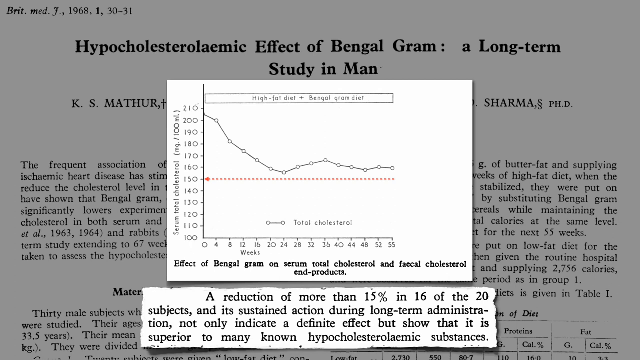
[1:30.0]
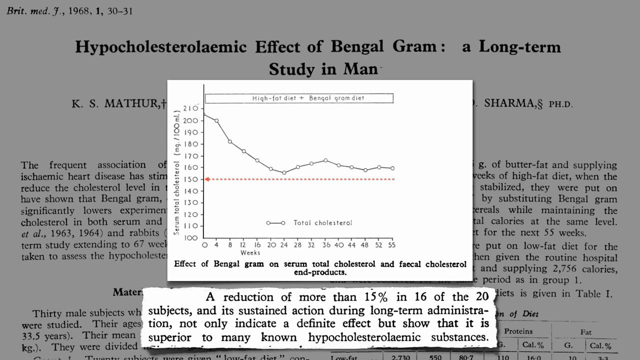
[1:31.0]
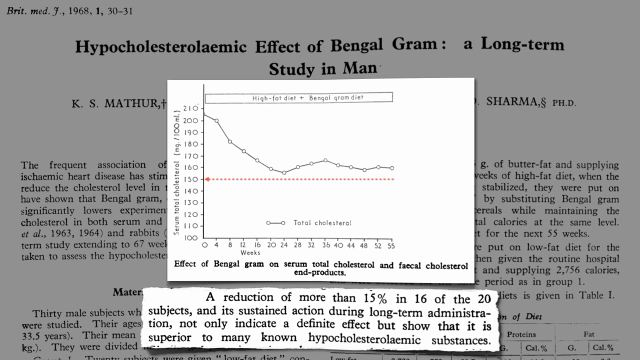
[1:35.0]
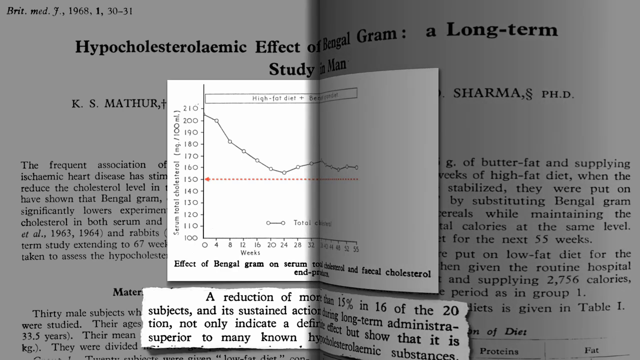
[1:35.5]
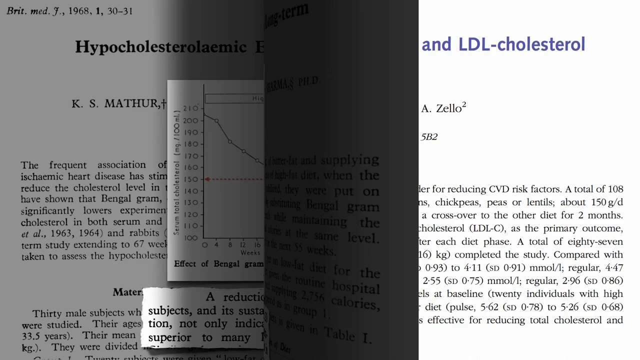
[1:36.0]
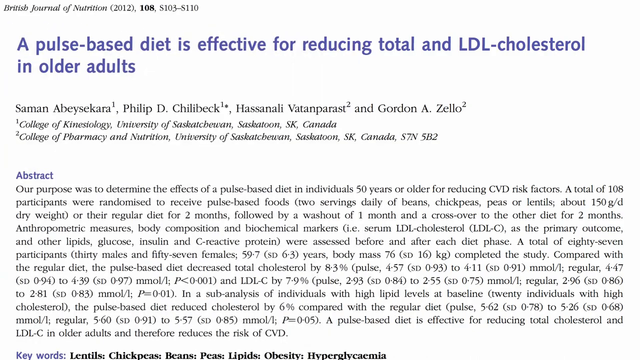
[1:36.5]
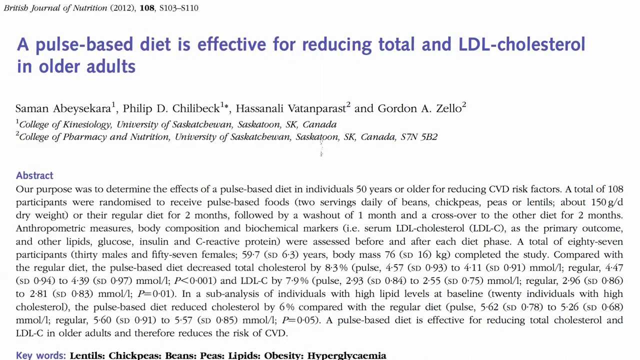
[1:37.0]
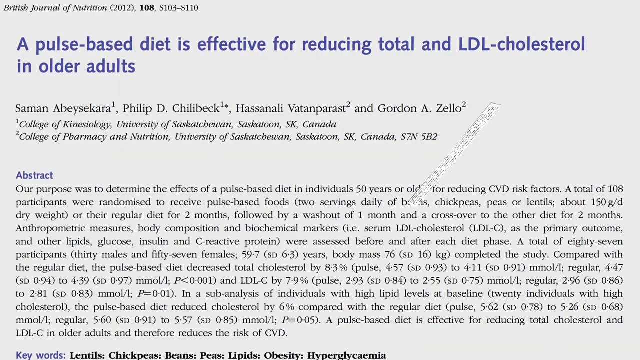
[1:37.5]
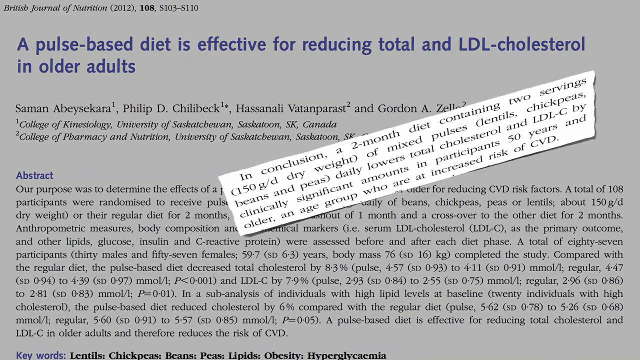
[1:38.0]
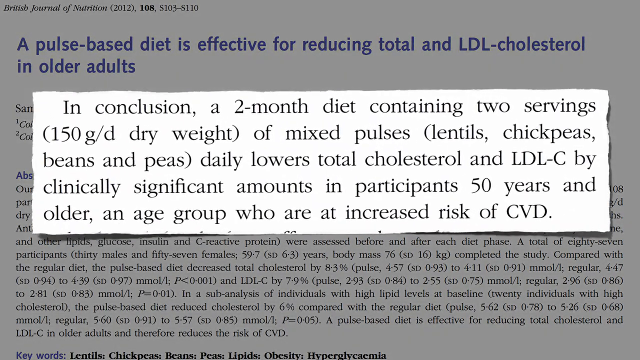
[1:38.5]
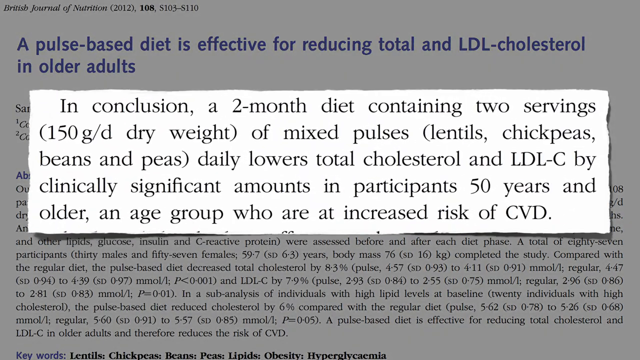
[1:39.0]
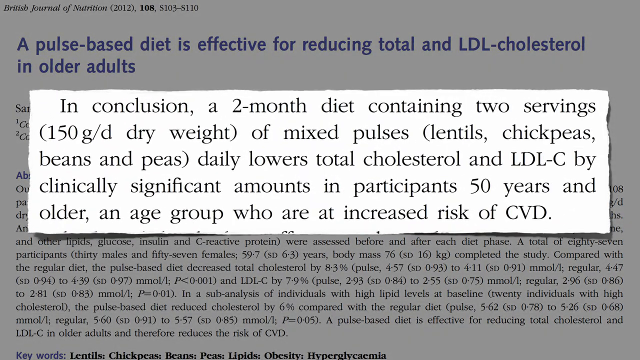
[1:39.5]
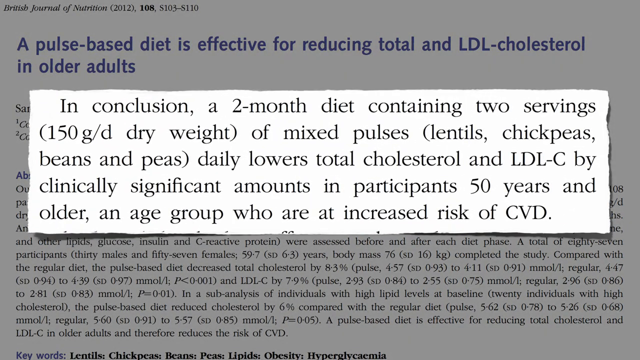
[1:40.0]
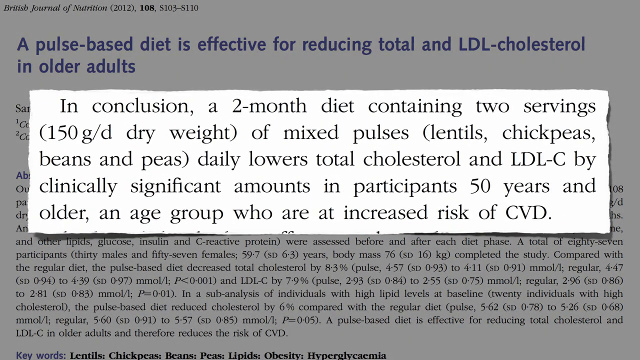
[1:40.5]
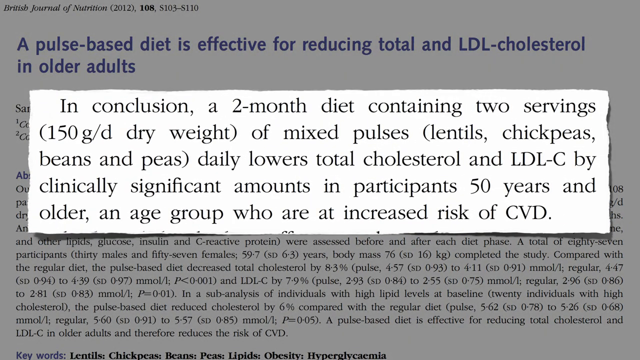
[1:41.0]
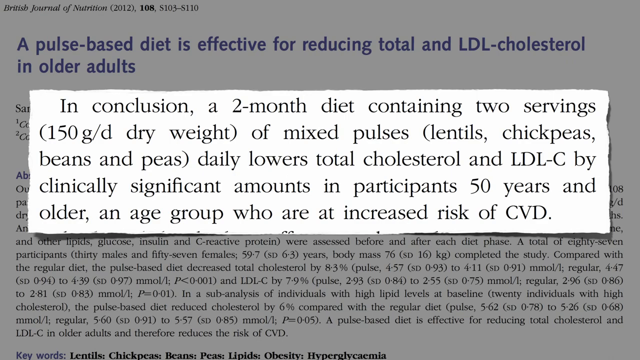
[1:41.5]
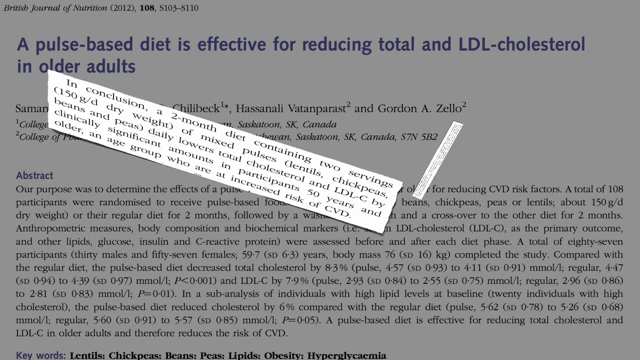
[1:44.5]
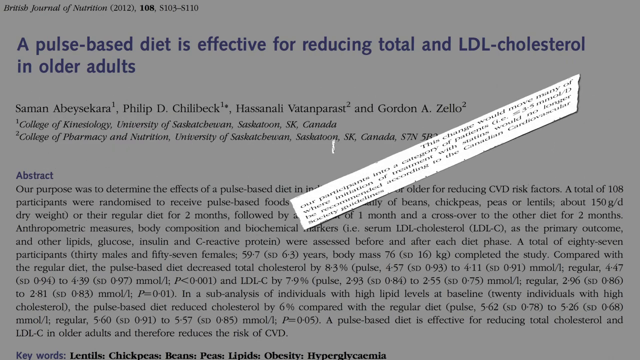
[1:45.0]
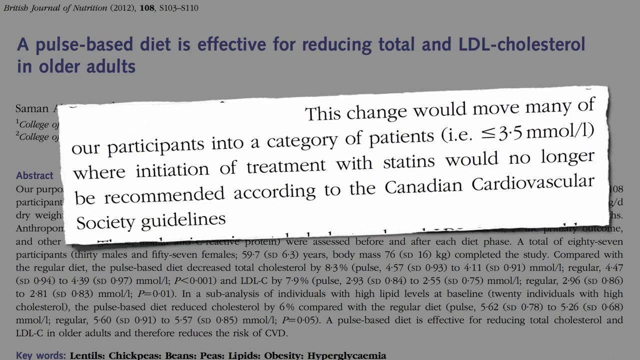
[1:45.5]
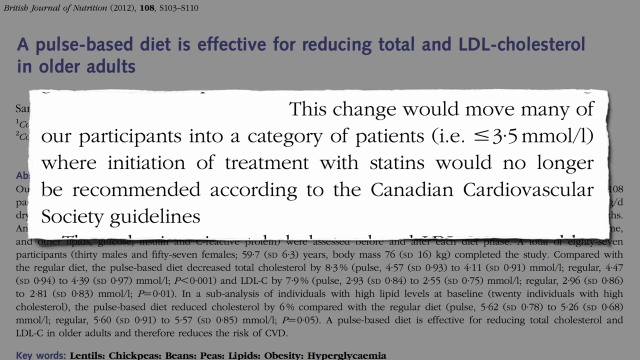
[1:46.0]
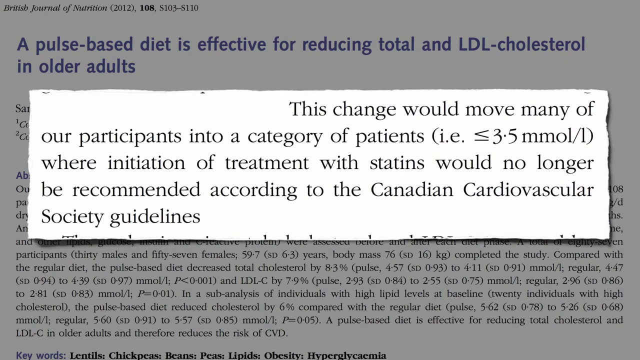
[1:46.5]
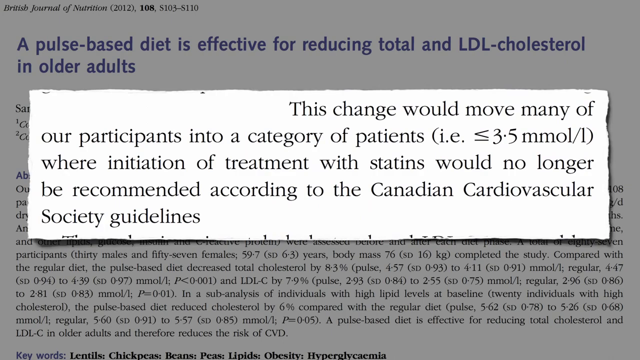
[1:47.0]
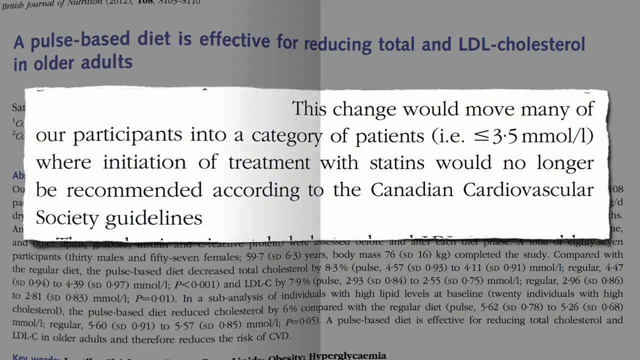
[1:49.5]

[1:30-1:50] A graph shows high fat diets and a Bengal gram diet in relation to reducing total cholesterol per 100 mL, alongside the statement of a reduction of more than 15% in 16 of the 20 subjects indicating a definite effect. Another study appears, titled "A pulse-based diet is effective for reducing total and LDL cholesterol in older adults". A specific excerpt is pointed to, reading "in conclusion, a two-month diet containing two servings, 150 grams dry weight of mixed pulses, lentils, chickpeas, beans, and peas daily, lowers total cholesterol and LDL-C by clinically significant amounts in participants 50 years and older, an age group who are at increased risk of CBD". The view then moves to another excerpt stating "the change would move many of our participants into a category of patients less than or equal to 3.5 mmol per liter, where initiation of treatment with statins would no longer be recommended according to the Canadian Cardiovascular Society guidelines".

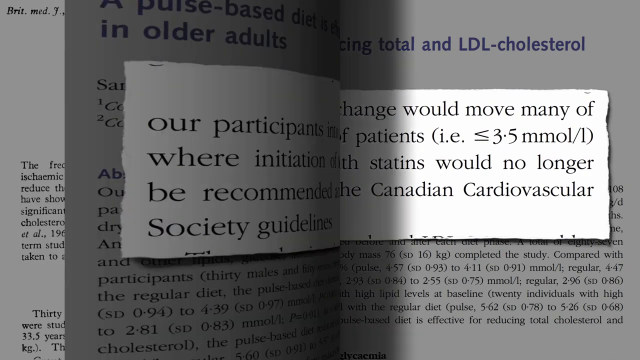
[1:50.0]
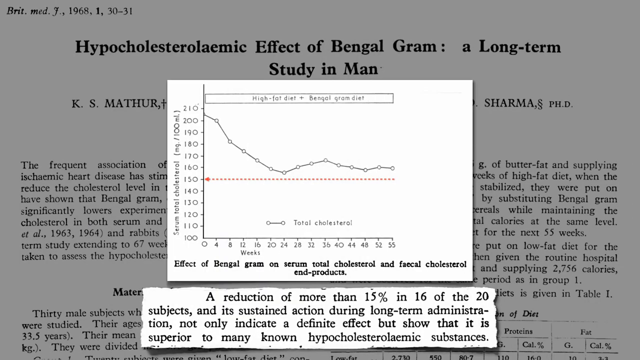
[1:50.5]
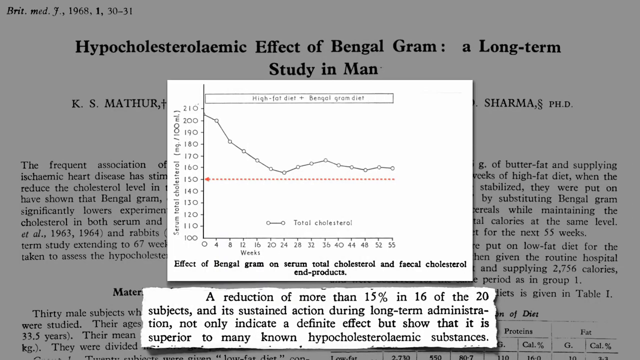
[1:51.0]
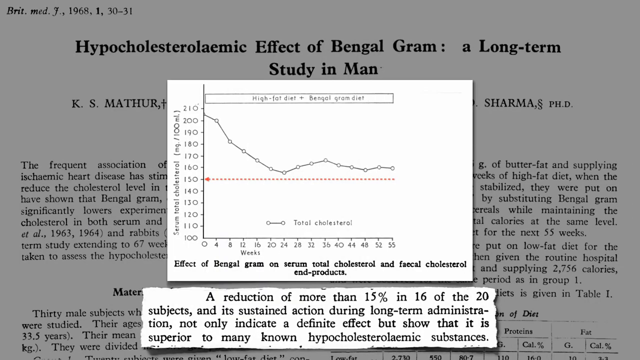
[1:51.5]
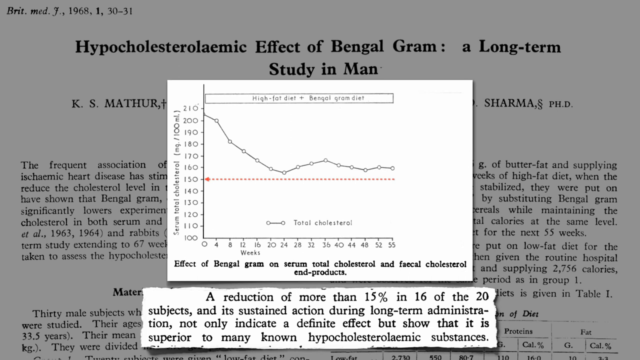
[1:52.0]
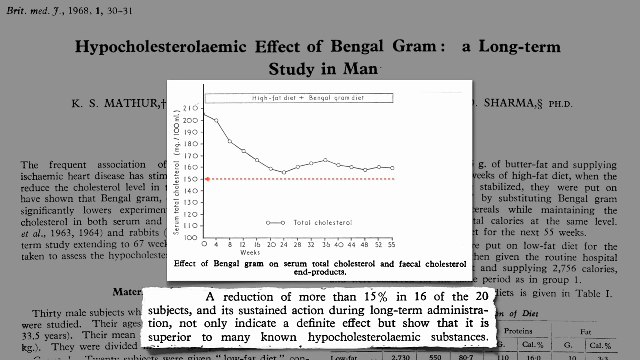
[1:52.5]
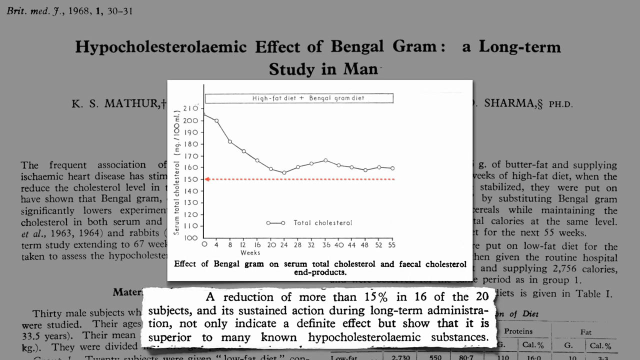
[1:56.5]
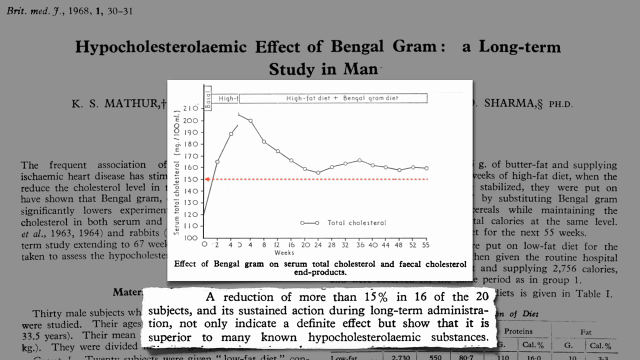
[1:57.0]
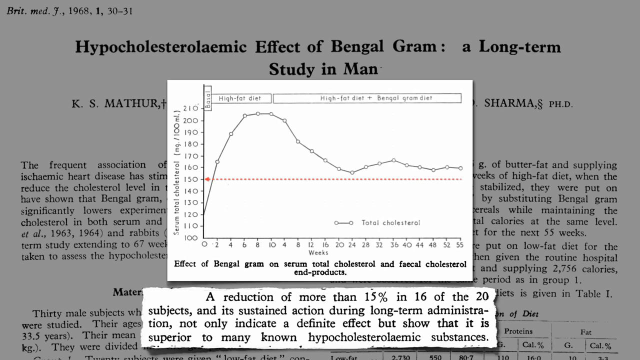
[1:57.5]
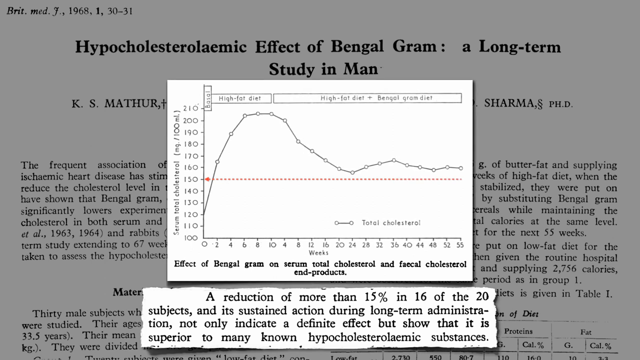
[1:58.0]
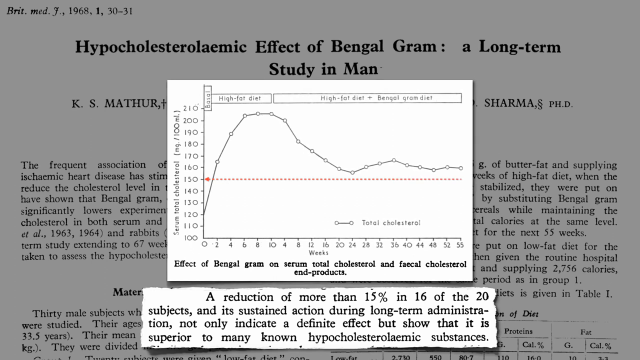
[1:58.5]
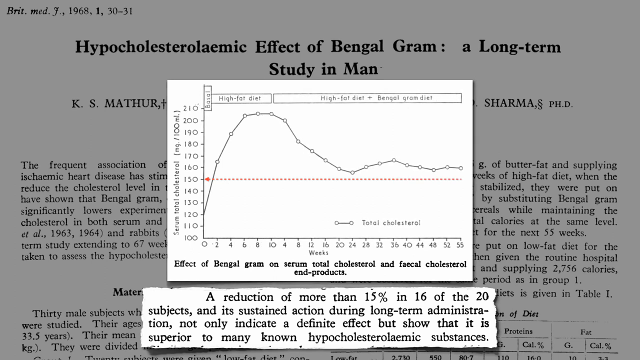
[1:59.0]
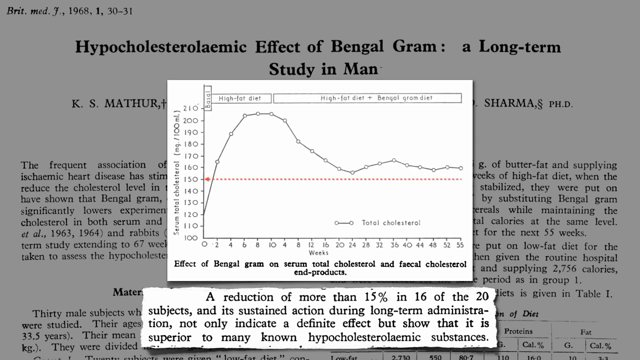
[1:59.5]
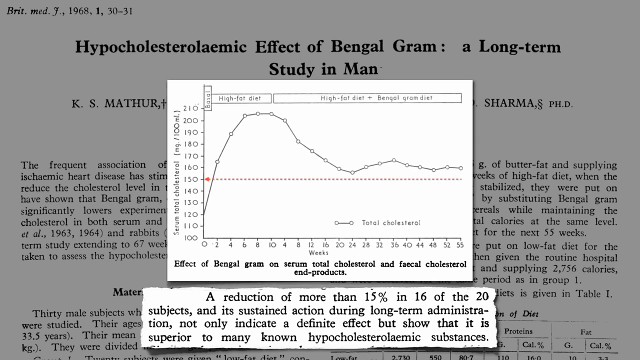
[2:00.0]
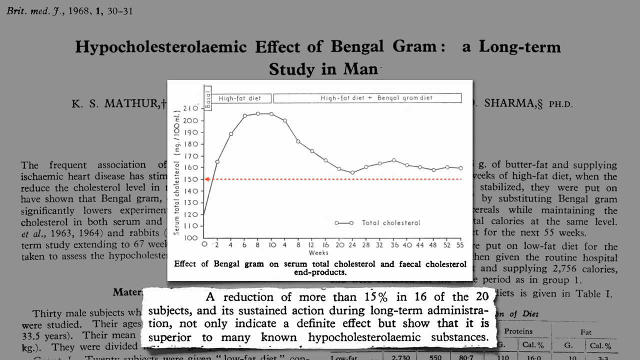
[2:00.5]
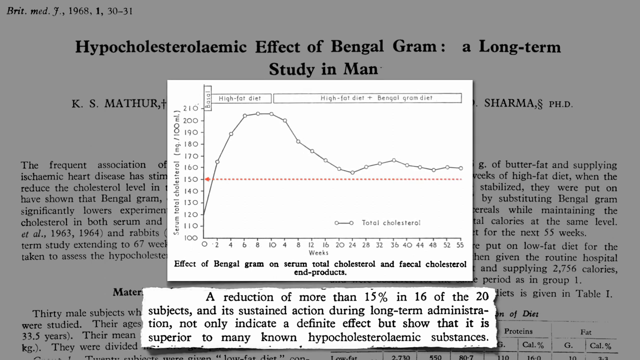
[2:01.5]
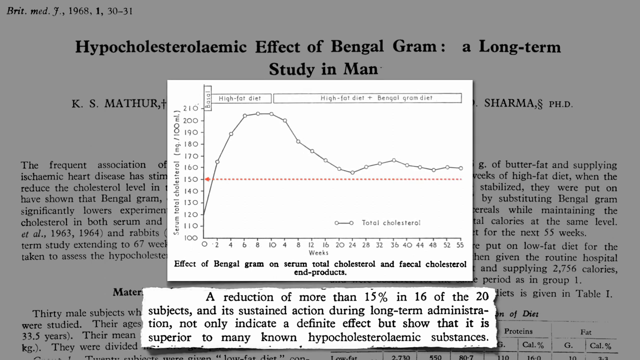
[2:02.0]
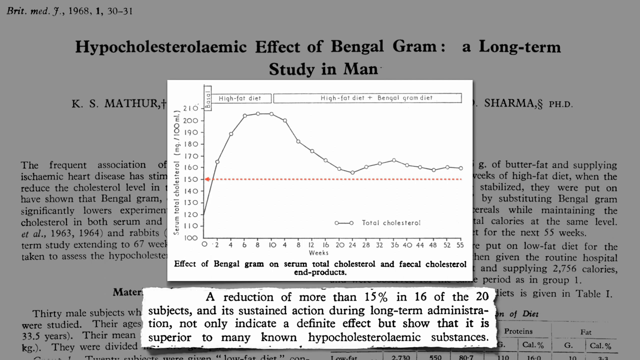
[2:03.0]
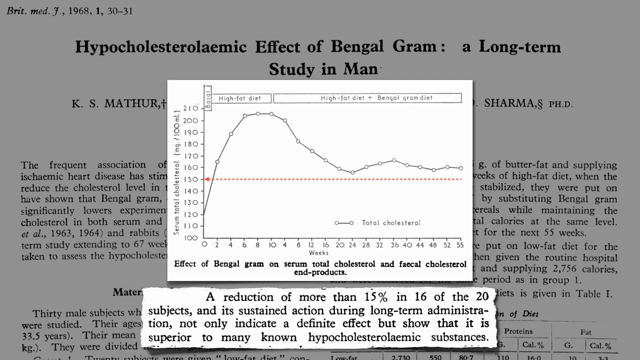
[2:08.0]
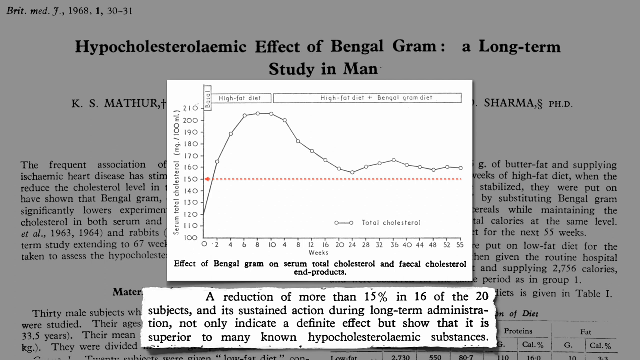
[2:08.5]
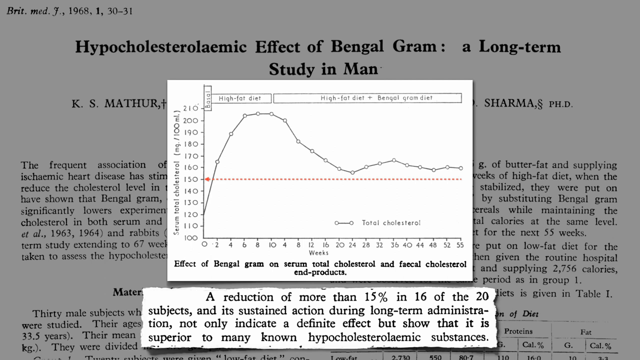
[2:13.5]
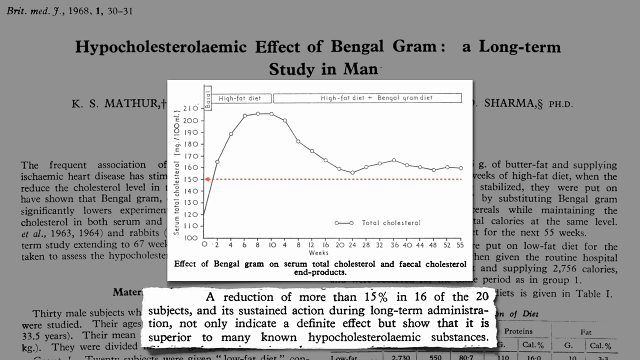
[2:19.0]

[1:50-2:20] A graph is shown with text about a reduction of more than 15% in 16 of the 20 subjects, whose sustained action during a long-term administration not only indicates a definite effect but shows it is superior to many known hypocholesterolemic substances. The graph covers timings from 0 to 55 weeks and drops, showing cholesterol lowering with a high-fat diet and Bengal gram diet; the video focuses mostly on the graph. It has two portions showing the effect of Bengal gram on serum total cholesterol and fecal cholesterol end products. With the high-fat diet plus Bengal gram diet, the value lowers from around 205 to around 160 within the first 20 weeks, stabilizes around 18 to 20 weeks, and stays around stagnant after that. Another graph appears that adds a portion from 0 to 6 weeks, in which total cholesterol rises from 120 to 200 before stabilizing and lowering to around 160.